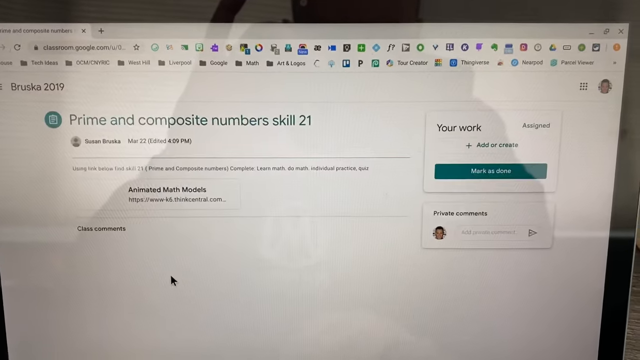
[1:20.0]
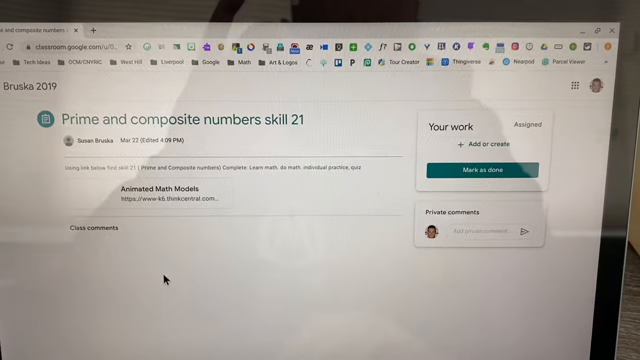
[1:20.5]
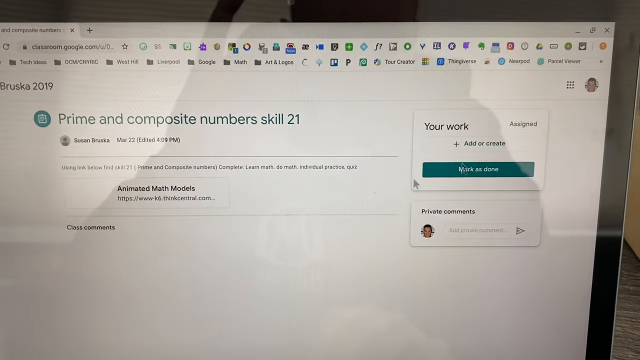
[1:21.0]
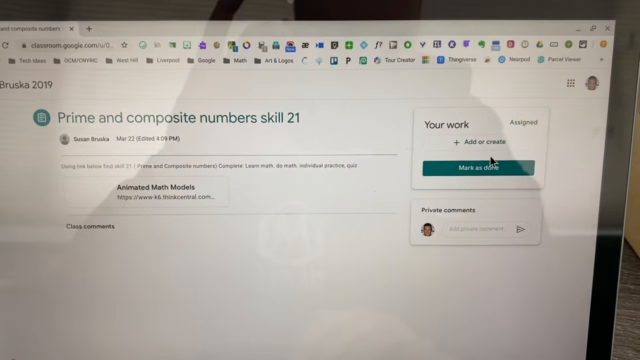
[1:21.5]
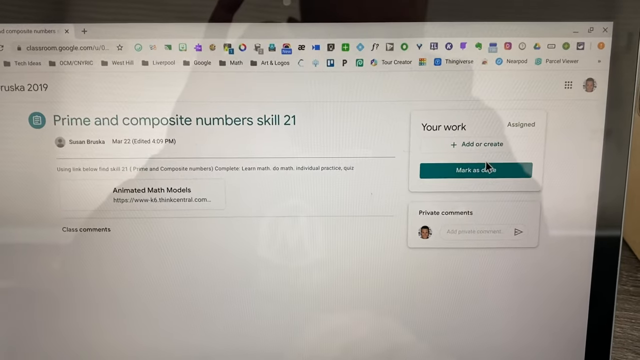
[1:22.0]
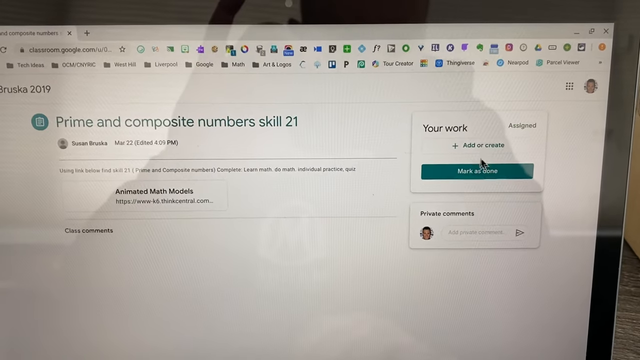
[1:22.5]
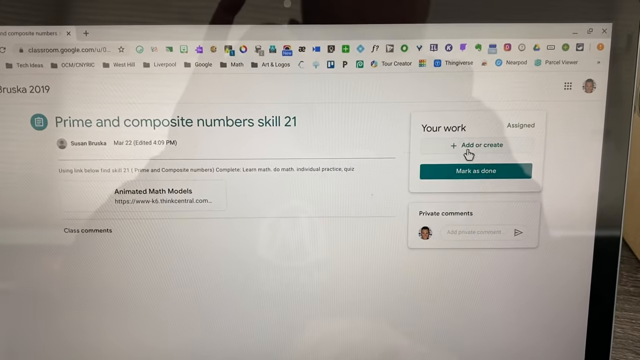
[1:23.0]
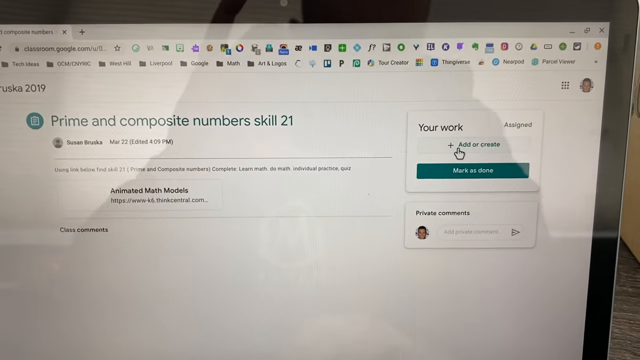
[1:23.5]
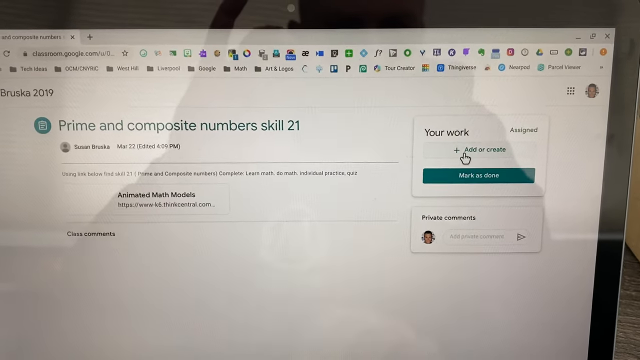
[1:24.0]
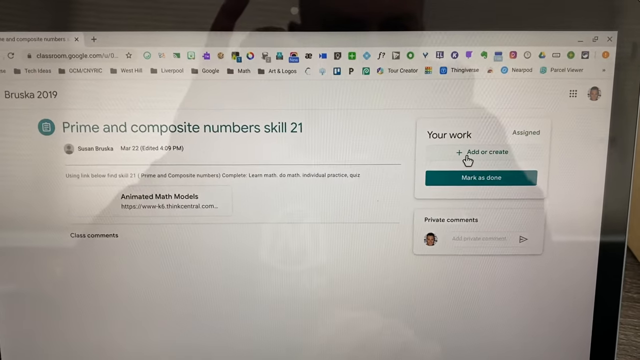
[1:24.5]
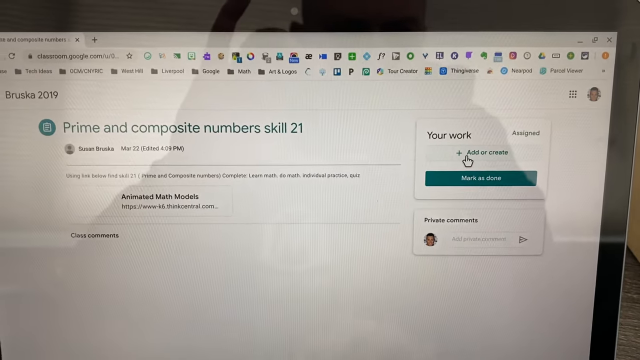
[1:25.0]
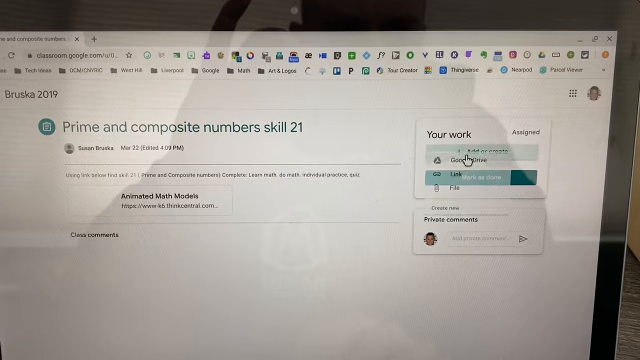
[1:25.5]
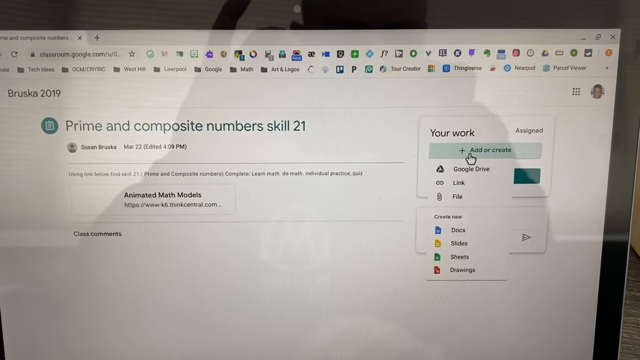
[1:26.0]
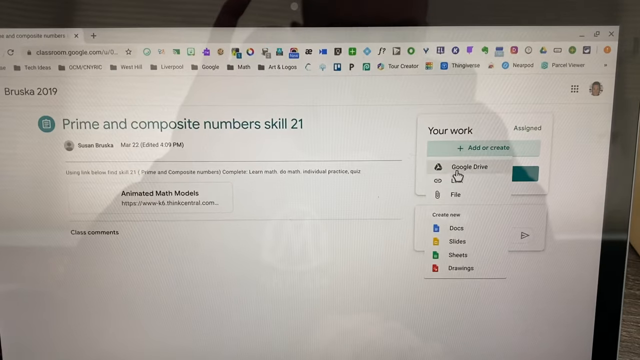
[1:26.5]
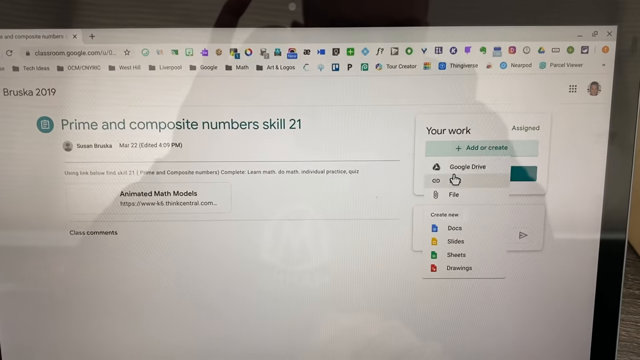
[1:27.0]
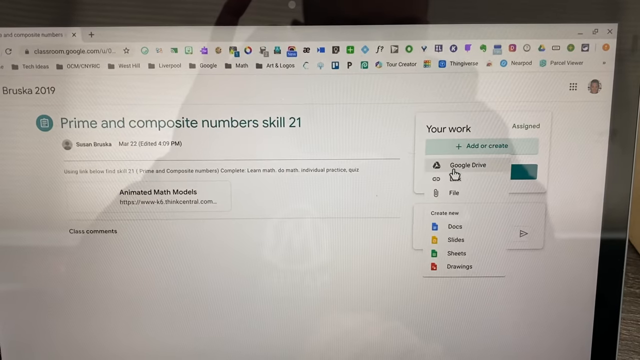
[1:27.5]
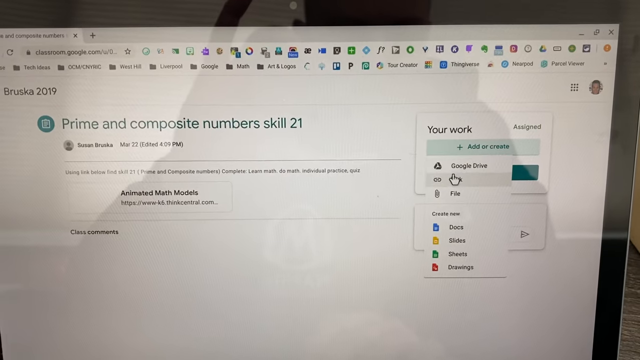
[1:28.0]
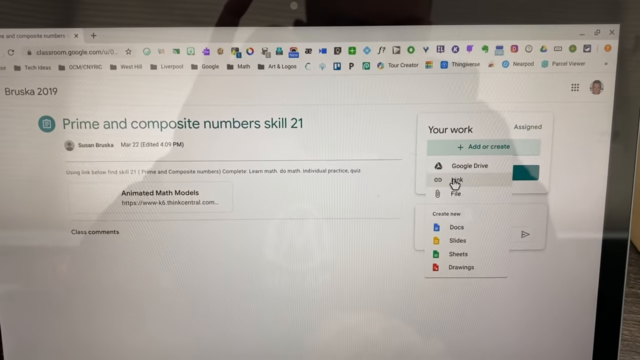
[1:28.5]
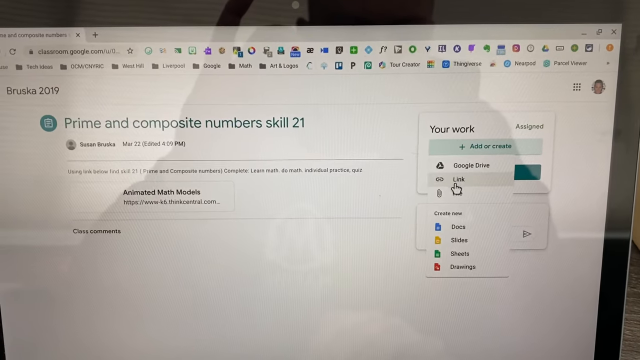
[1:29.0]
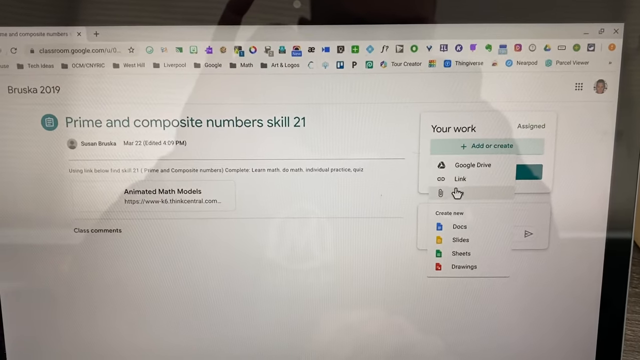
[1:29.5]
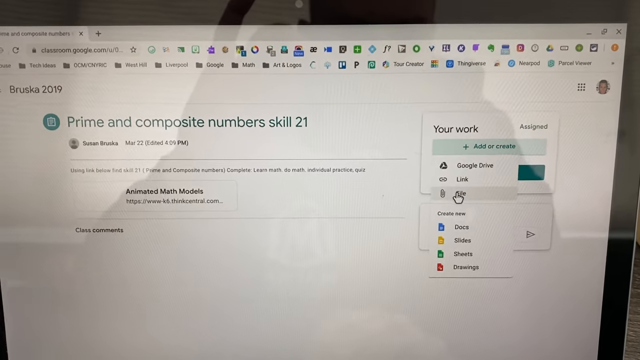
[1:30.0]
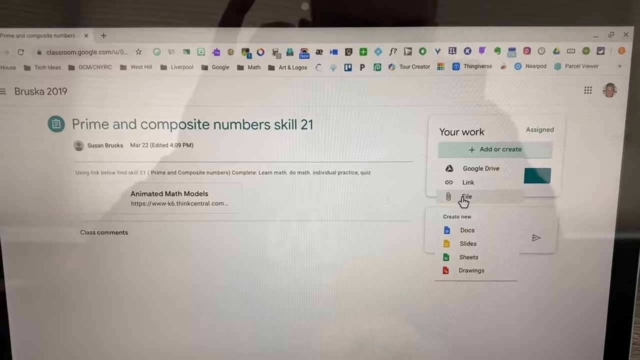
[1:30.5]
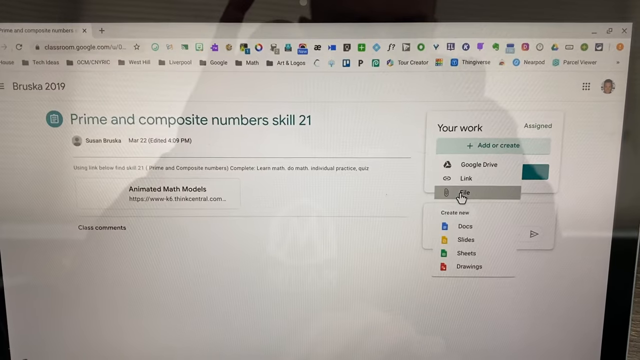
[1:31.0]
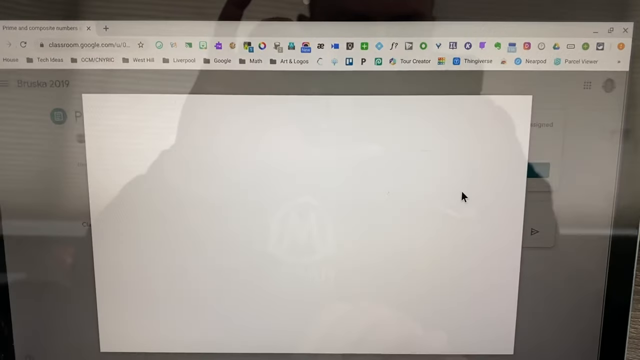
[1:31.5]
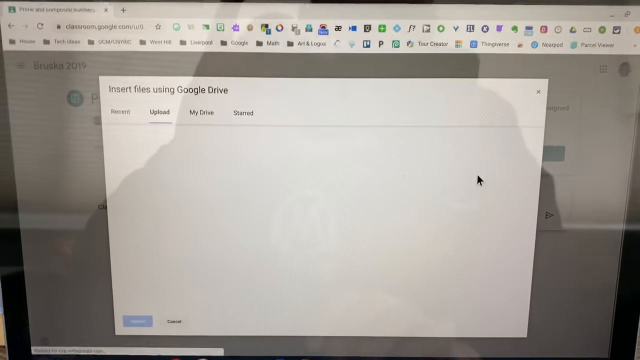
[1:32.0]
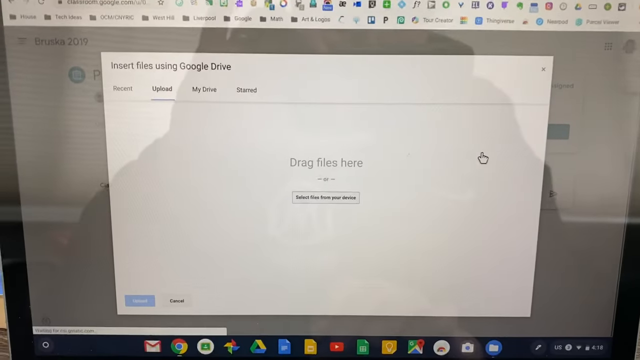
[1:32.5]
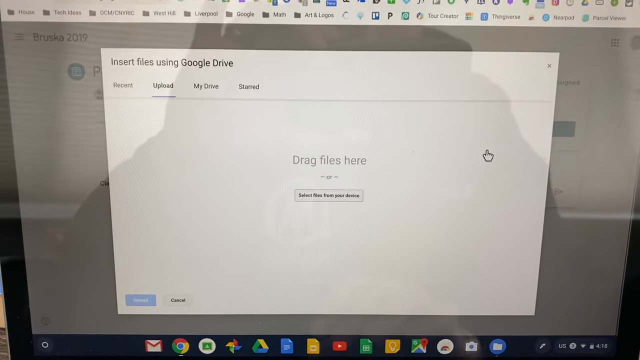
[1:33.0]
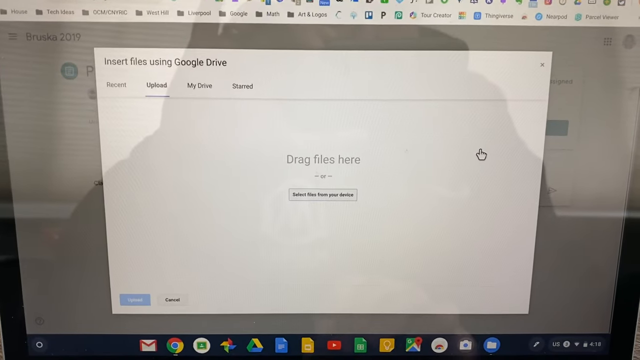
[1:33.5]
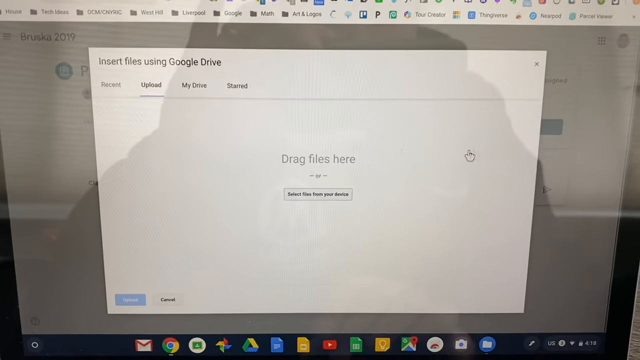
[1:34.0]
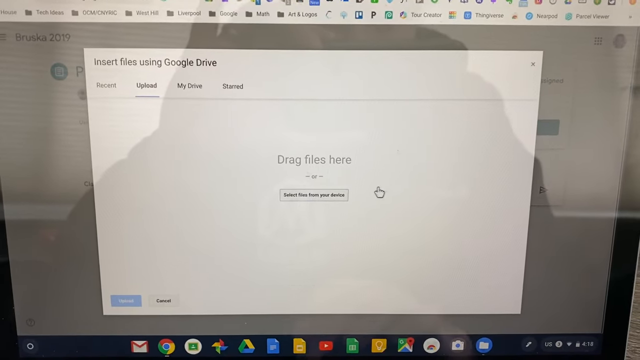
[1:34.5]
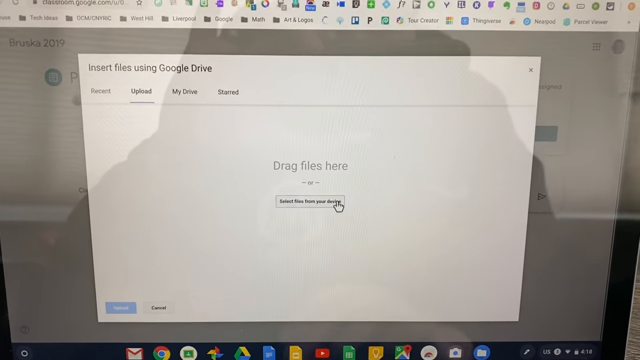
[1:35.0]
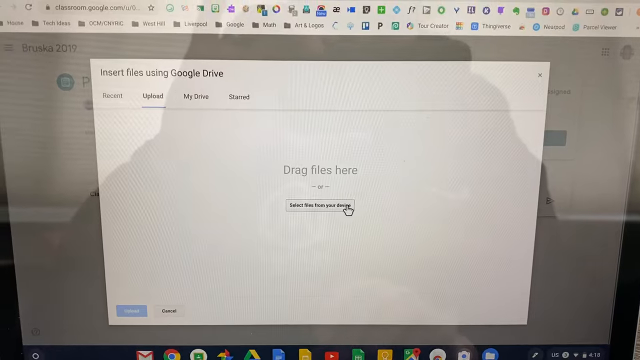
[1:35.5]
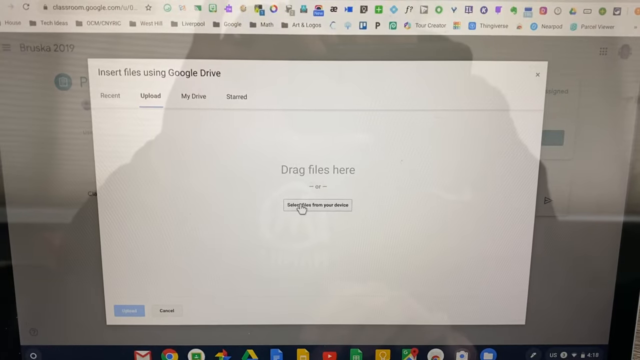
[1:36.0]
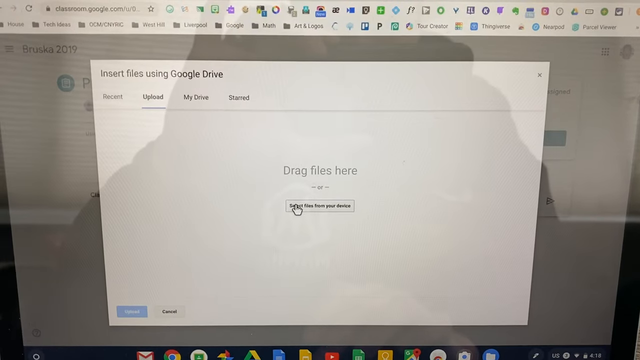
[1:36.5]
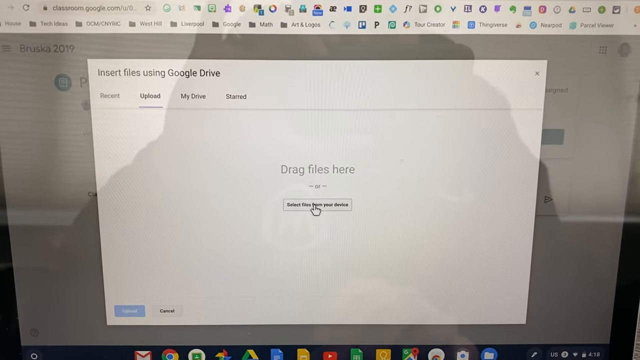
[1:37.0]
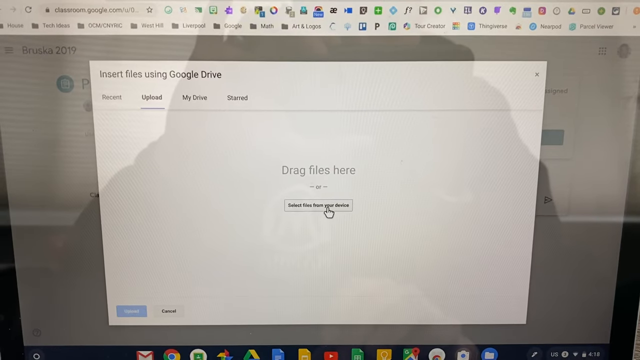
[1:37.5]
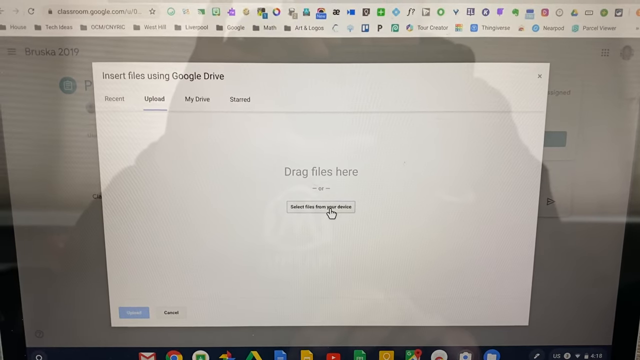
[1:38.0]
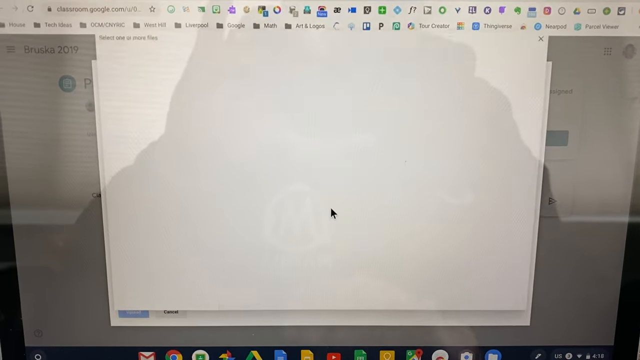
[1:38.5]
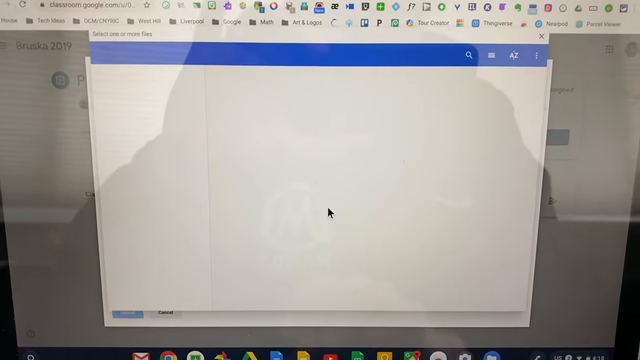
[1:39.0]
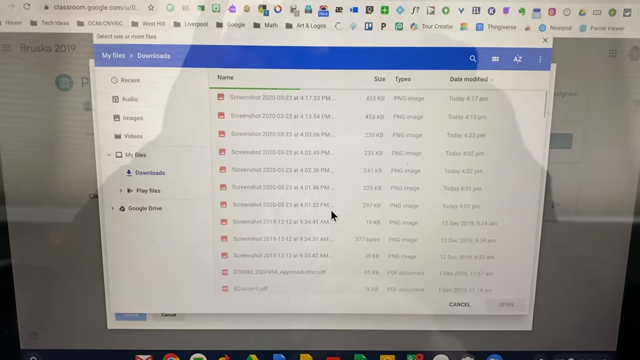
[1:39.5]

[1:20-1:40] The cursor moves over to "add or create", and a pull-down menu appears. Skipping past Google Drive and link, "file" is clicked. The screen says "drag files here" and "select files from your device". The window where the screenshot was saved is opened. The classwork text reads "Prime and Composite Numbers Skill 21", along with 2019 and a name. The screenshot just created is the top item on the screen, and it is about to be clicked.